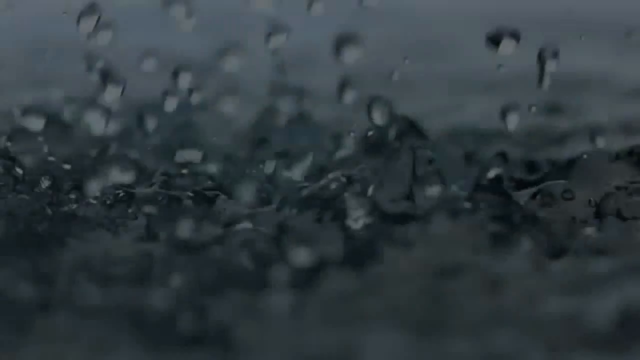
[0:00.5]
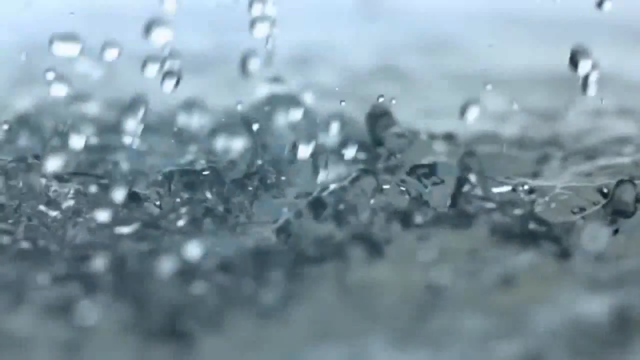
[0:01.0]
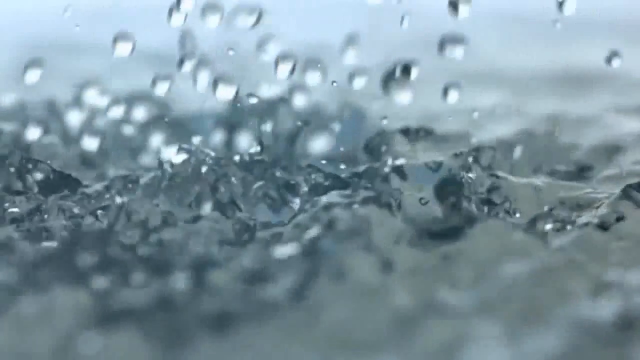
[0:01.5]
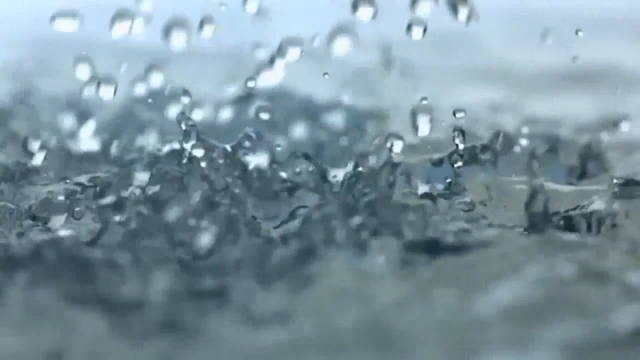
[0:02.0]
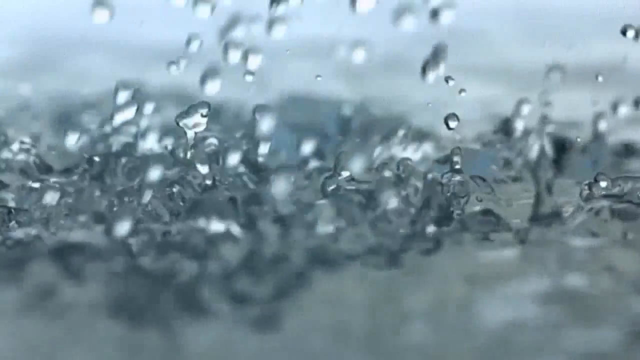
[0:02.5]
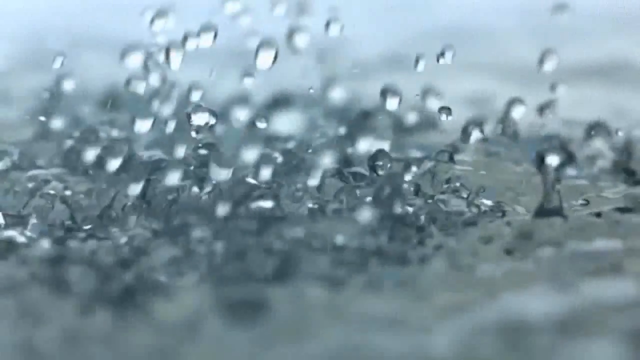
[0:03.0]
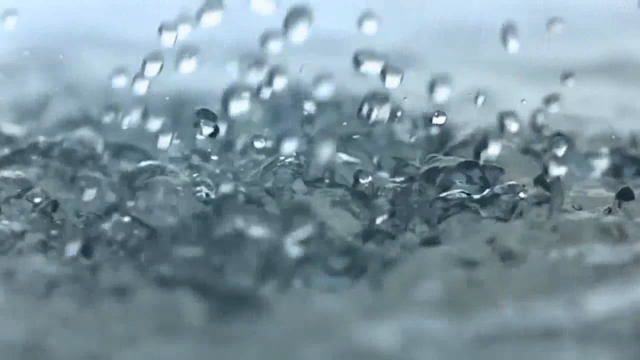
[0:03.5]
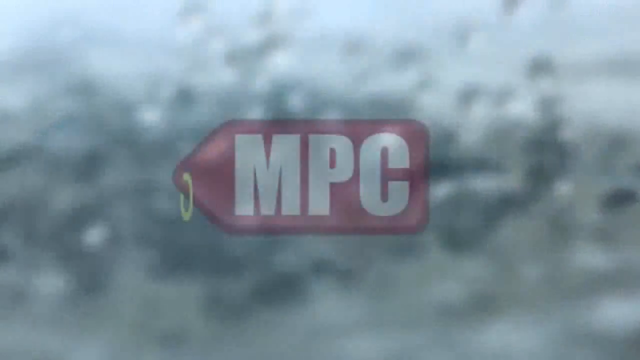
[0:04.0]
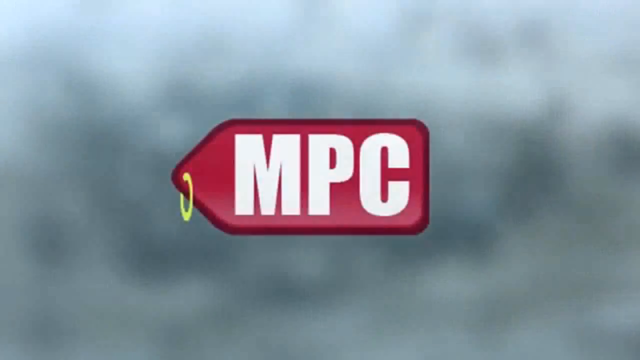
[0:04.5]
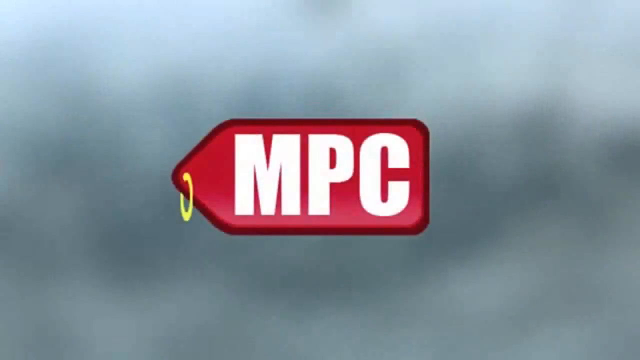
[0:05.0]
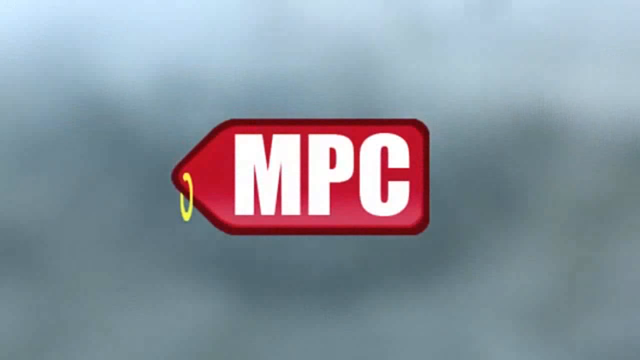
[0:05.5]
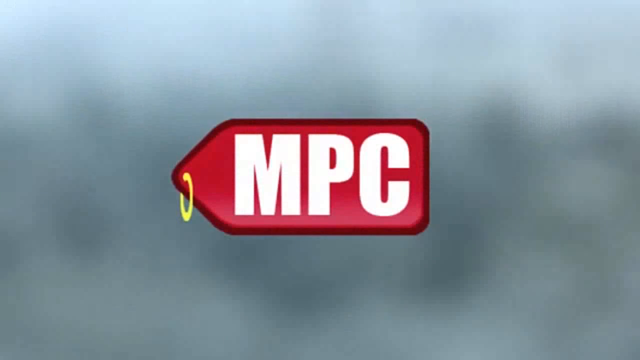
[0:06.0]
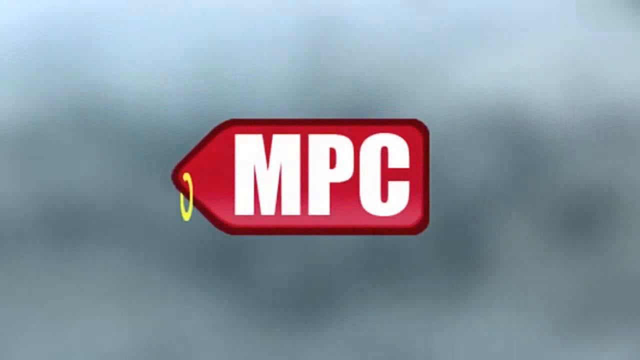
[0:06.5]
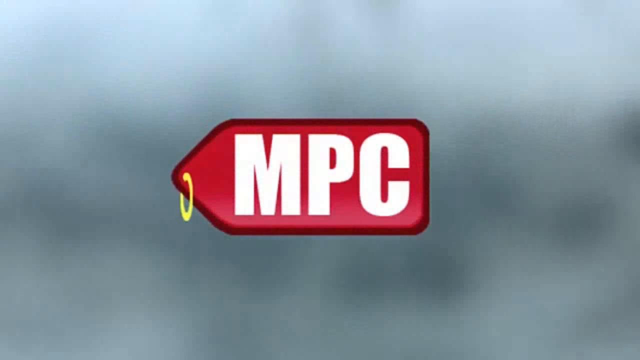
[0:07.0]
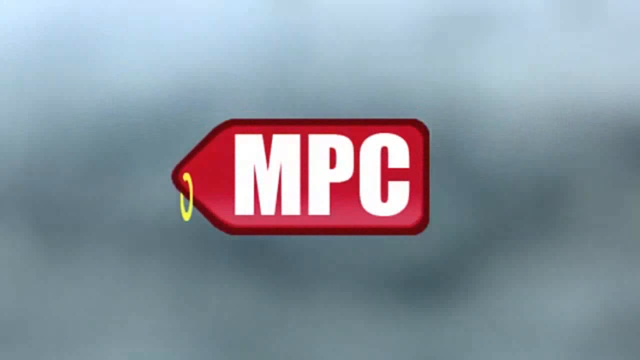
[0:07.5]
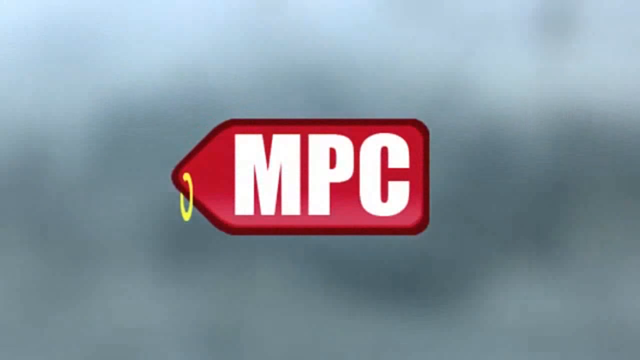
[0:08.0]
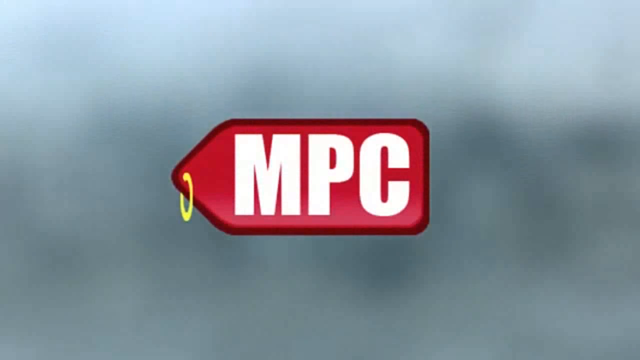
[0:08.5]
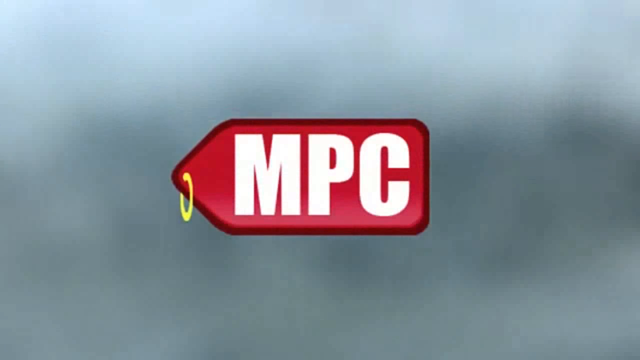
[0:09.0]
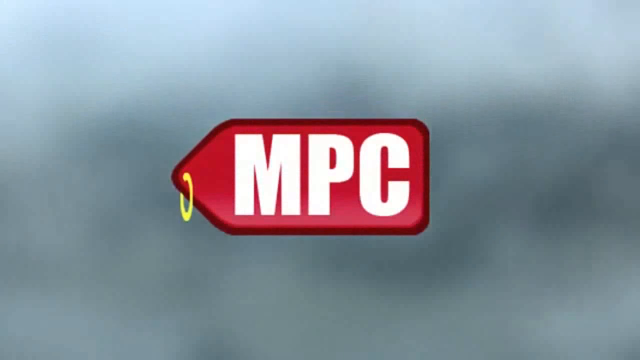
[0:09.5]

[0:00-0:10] The video opens with a very close-up shot of raindrops falling, water or rain falling into another body of water or a puddle. A logo then appears in the middle of the screen: a red price tag with the letters "MPC" written on it in white capital letters, and a yellow attachment on the tag. The logo is set against a gray background. The screen then turns all black.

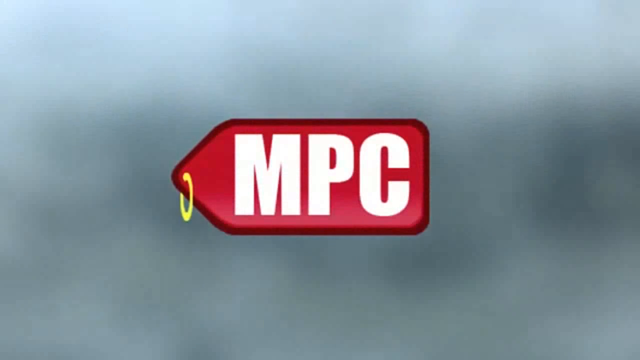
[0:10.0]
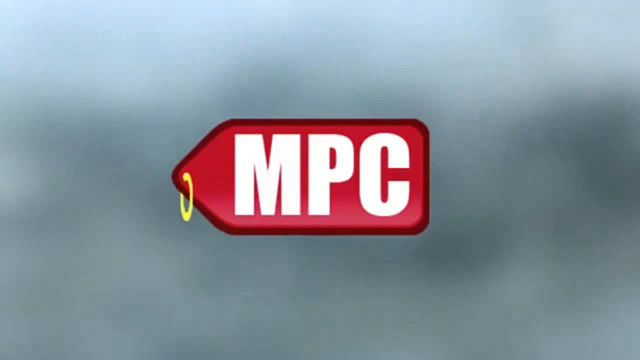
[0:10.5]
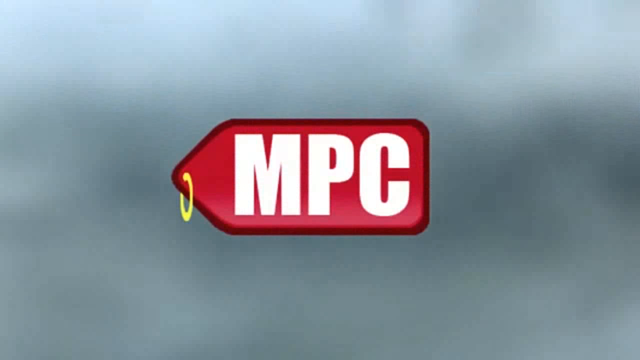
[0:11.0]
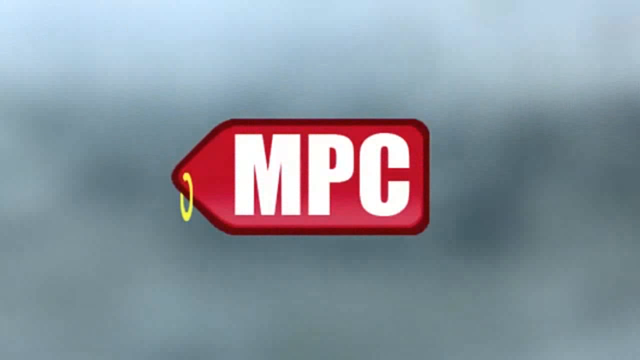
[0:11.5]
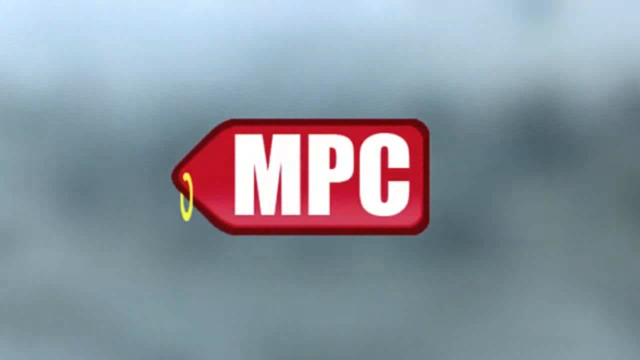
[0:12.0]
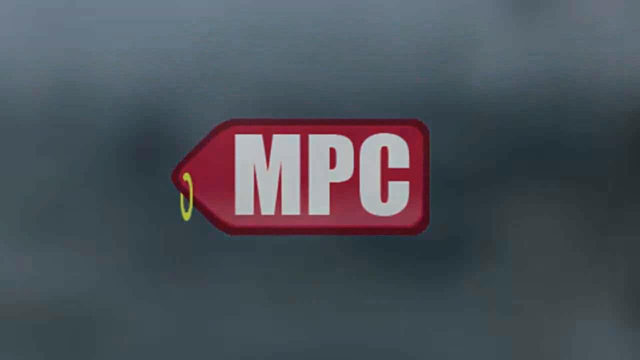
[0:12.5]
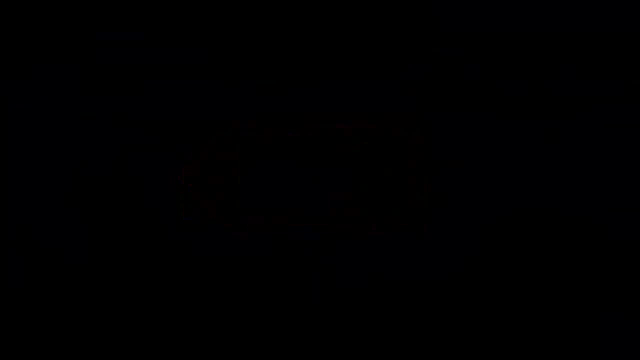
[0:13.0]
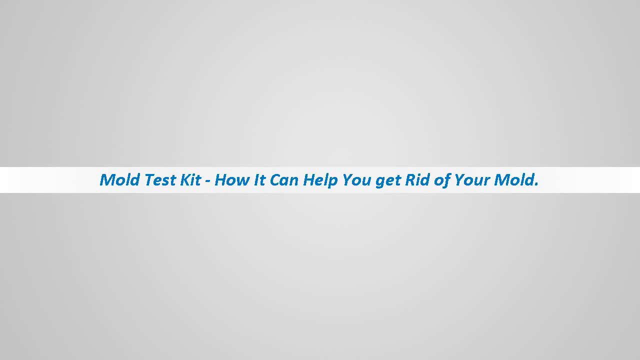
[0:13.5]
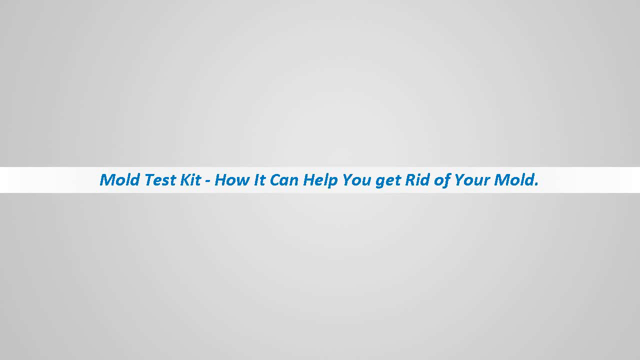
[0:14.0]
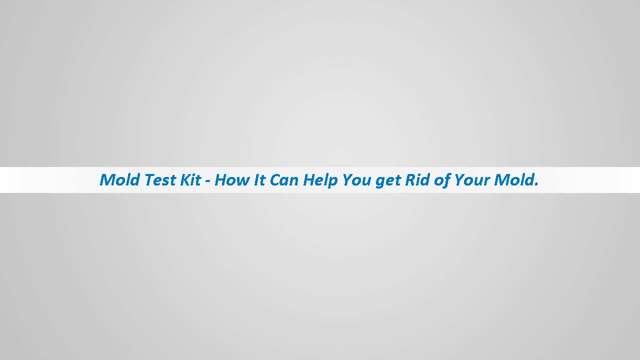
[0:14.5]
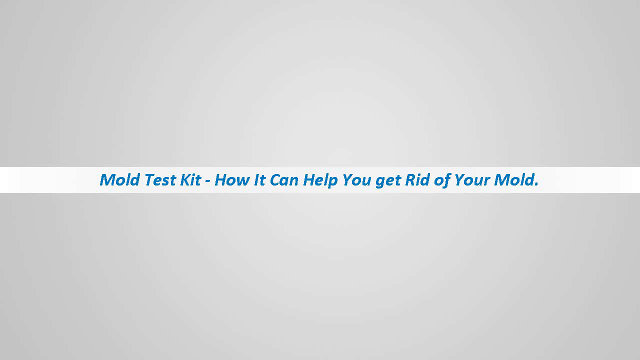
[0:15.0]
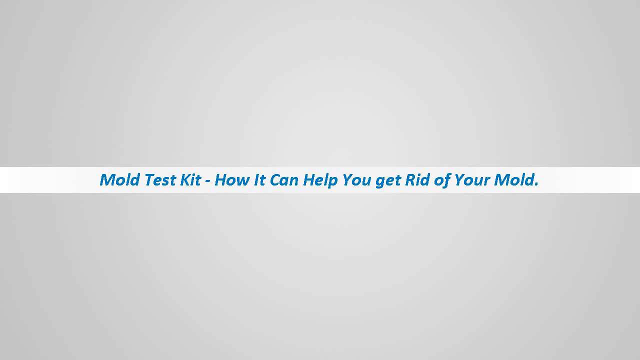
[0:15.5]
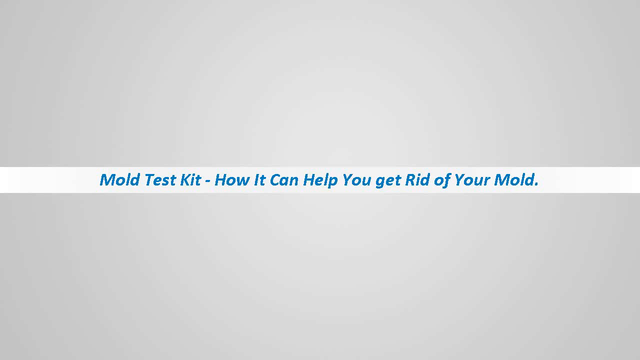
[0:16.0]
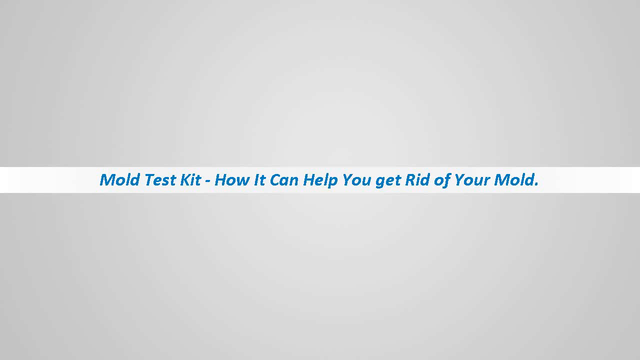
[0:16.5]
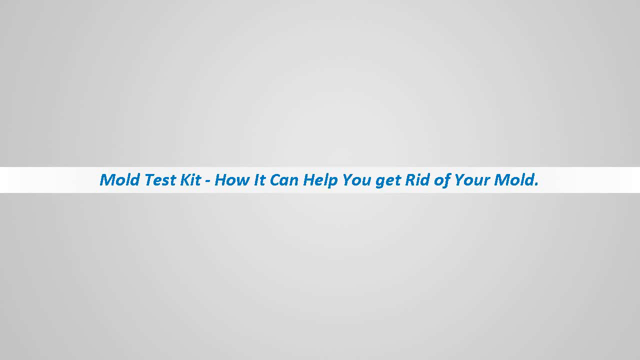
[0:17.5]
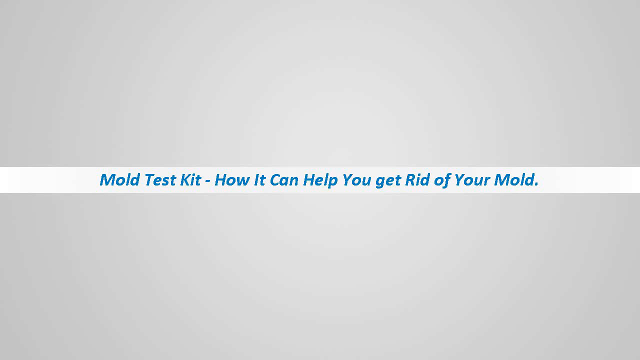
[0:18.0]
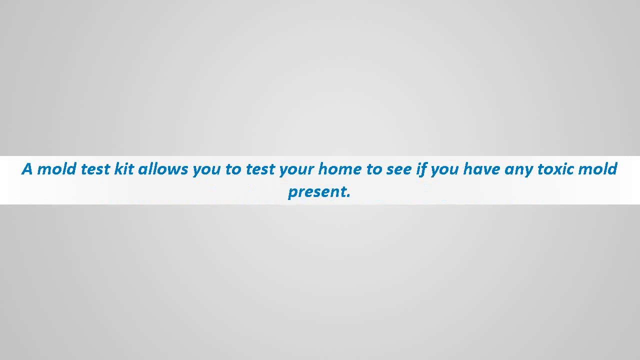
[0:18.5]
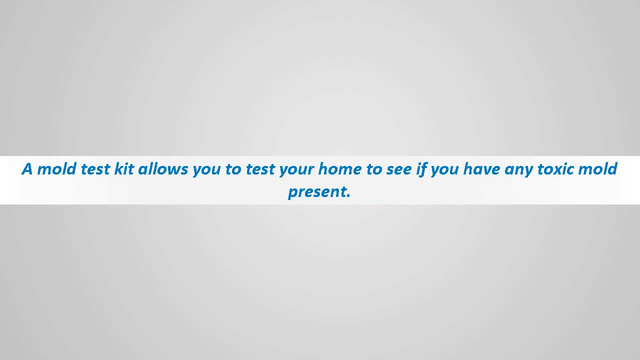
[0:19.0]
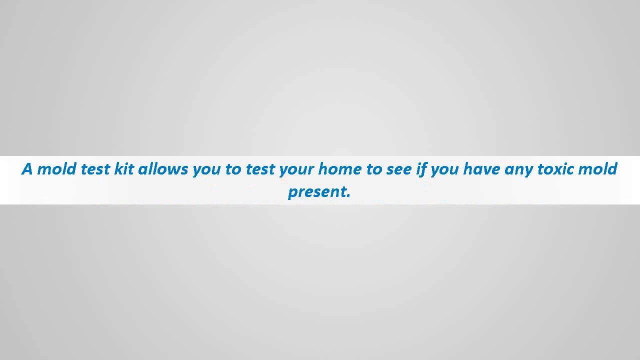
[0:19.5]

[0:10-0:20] The logo appears: a red tag, similar to a tag seen on clothes, with a small yellow attachment at the top and white capital letters on it, set against a gray background. The video then moves to a gray background with a white strip in the middle of the screen. Within the strip, blue text reads "Mold test kit. How it can help you get rid of your mold."